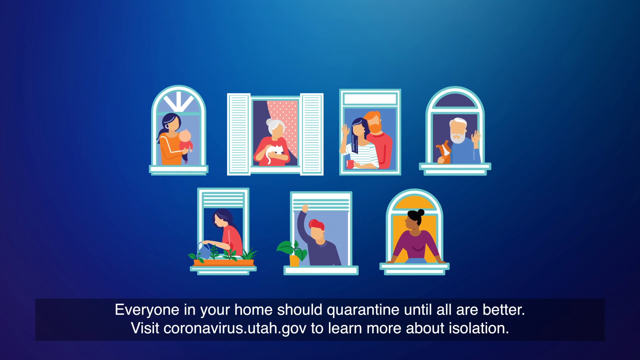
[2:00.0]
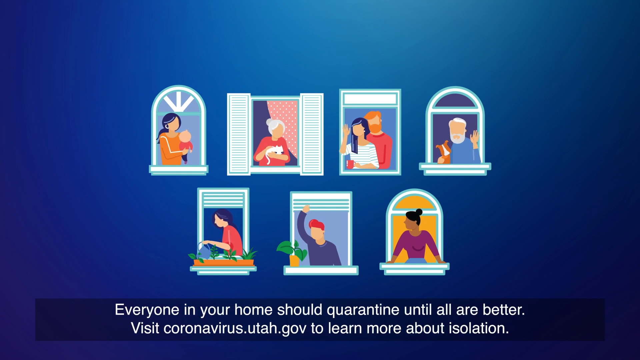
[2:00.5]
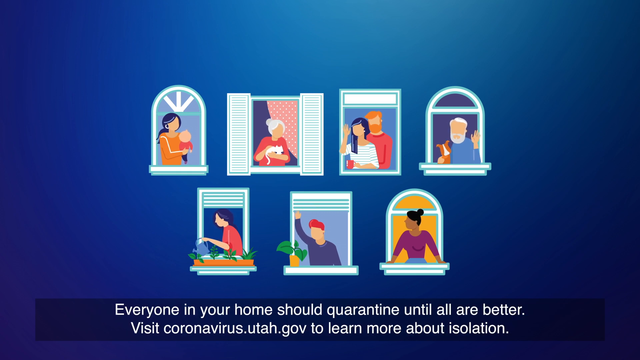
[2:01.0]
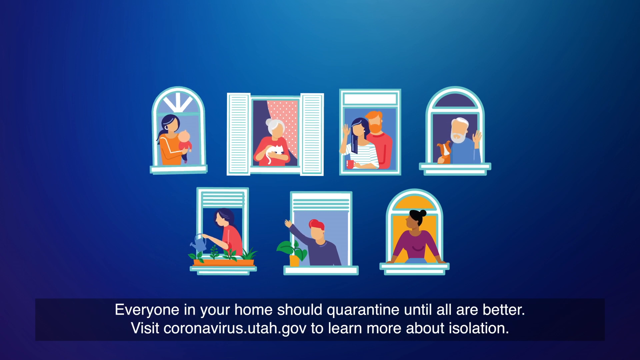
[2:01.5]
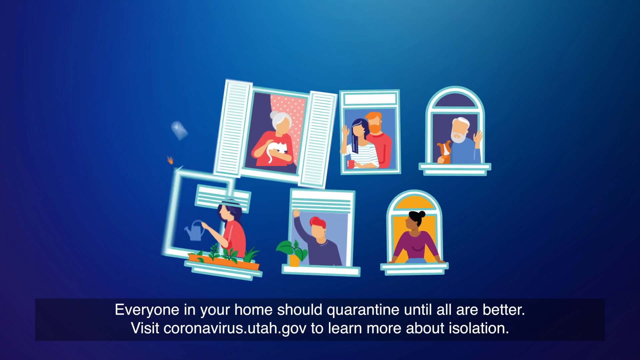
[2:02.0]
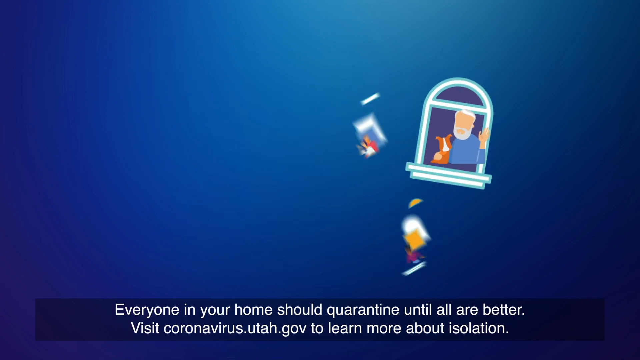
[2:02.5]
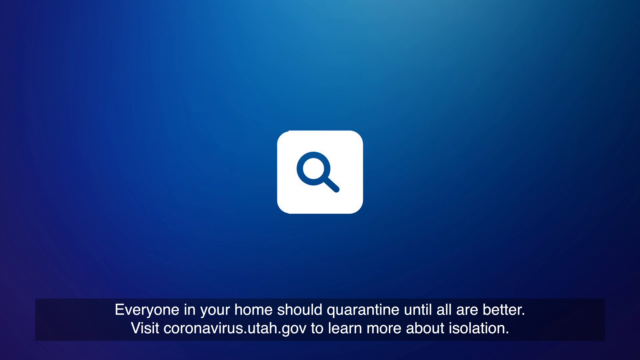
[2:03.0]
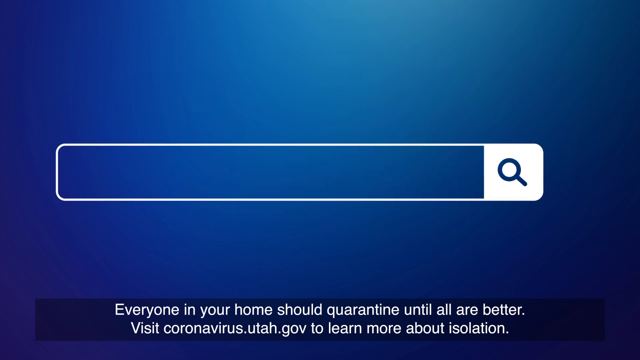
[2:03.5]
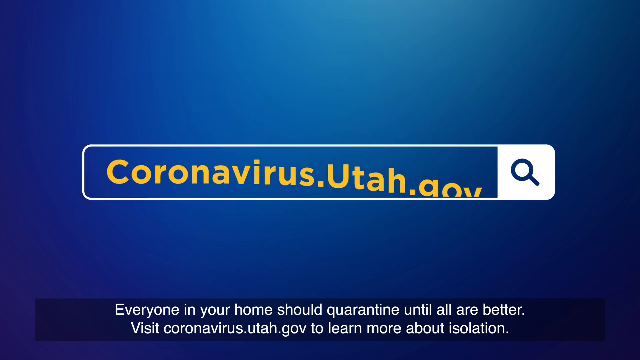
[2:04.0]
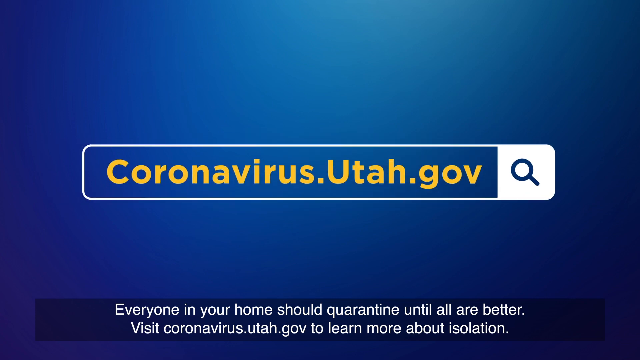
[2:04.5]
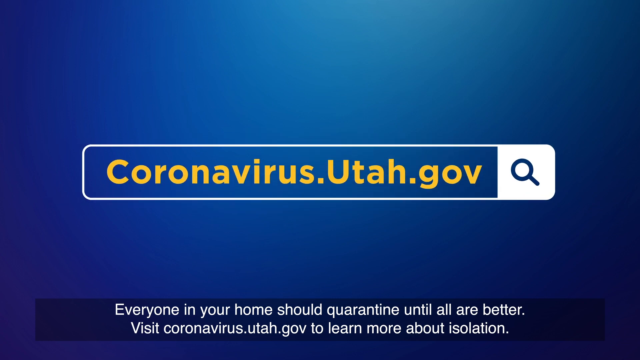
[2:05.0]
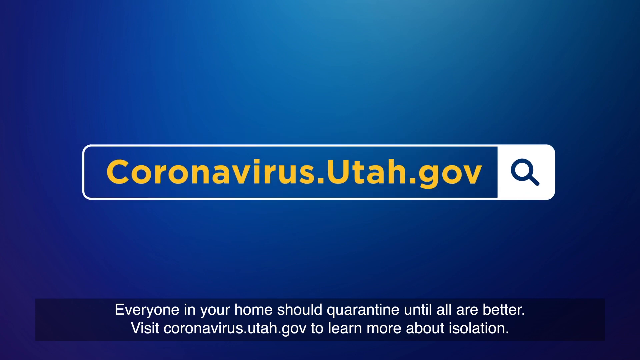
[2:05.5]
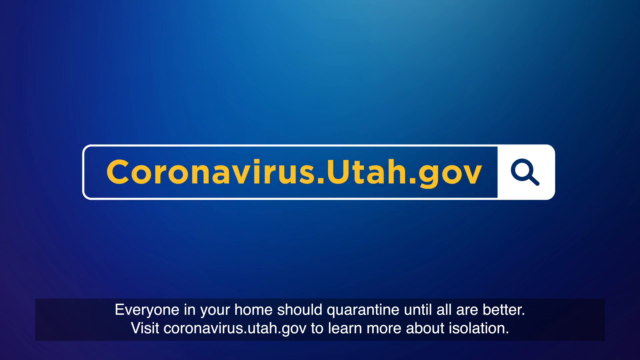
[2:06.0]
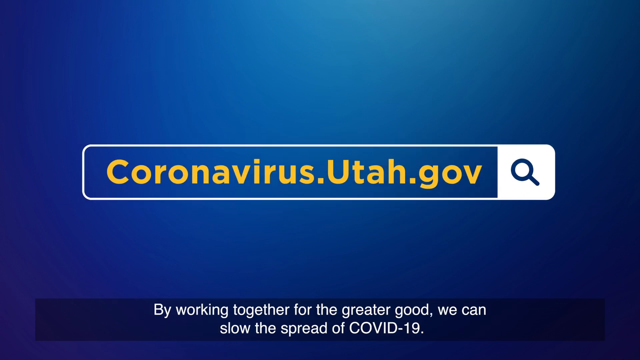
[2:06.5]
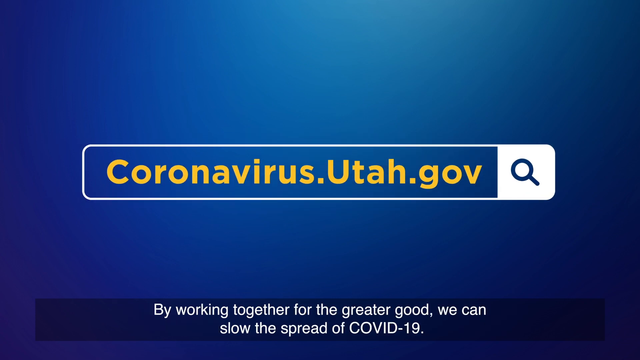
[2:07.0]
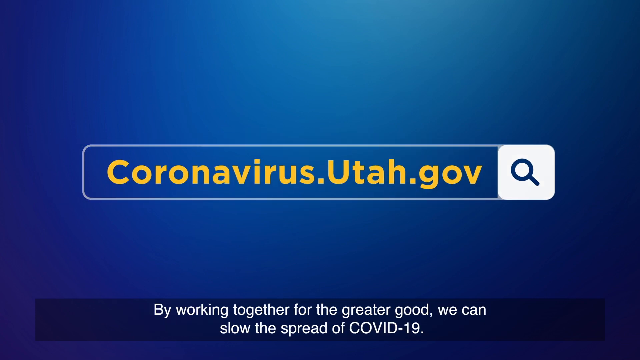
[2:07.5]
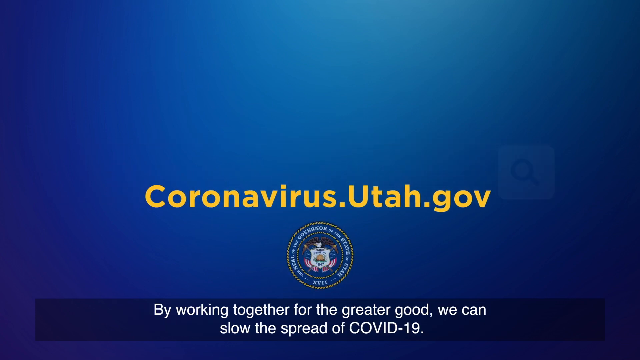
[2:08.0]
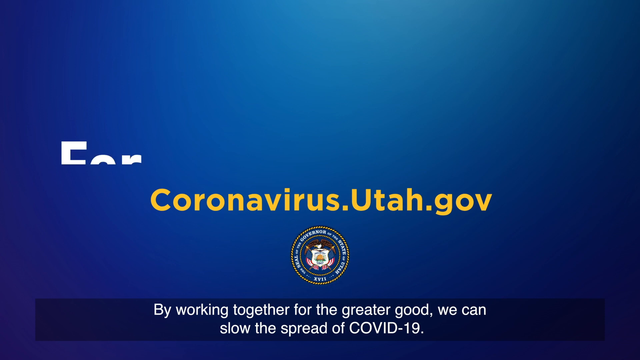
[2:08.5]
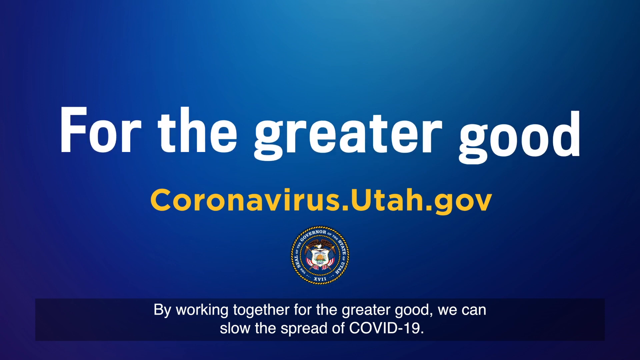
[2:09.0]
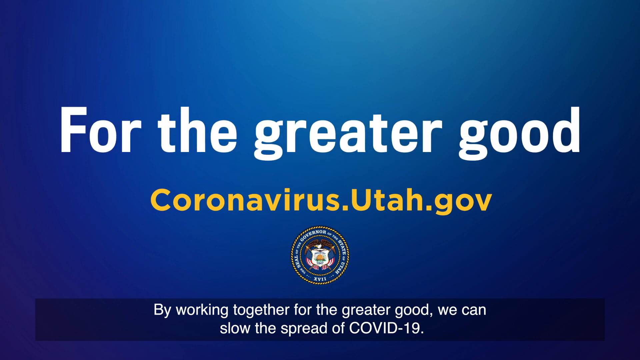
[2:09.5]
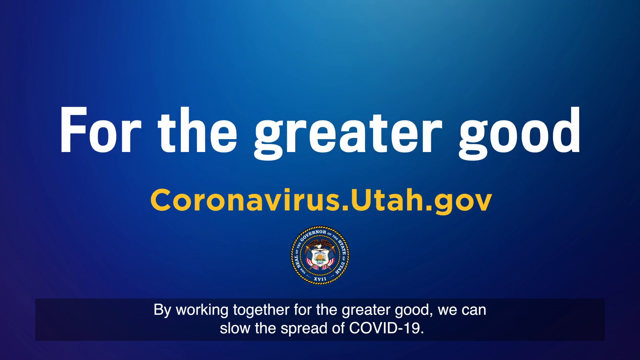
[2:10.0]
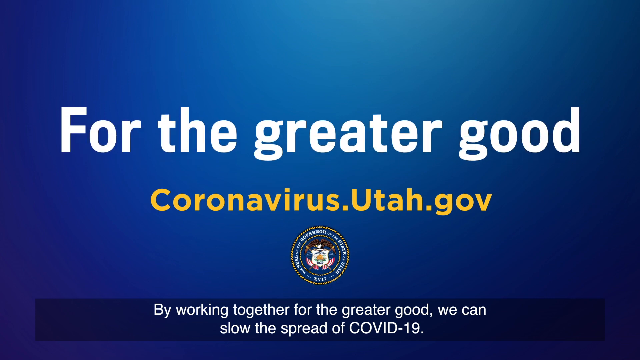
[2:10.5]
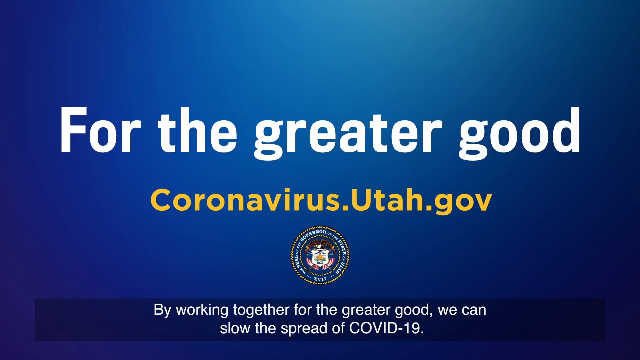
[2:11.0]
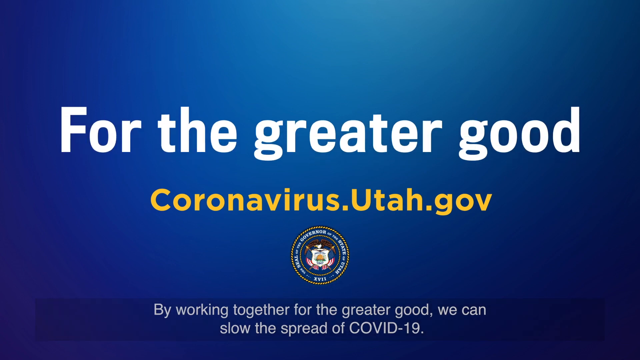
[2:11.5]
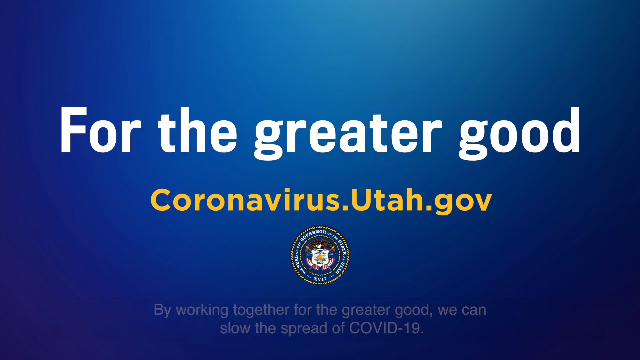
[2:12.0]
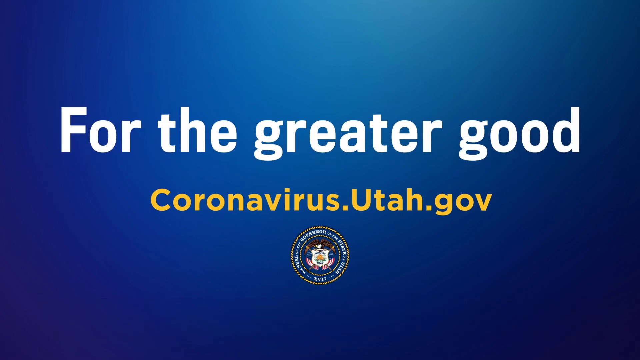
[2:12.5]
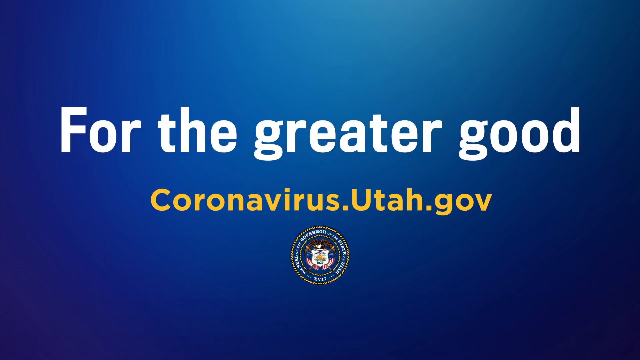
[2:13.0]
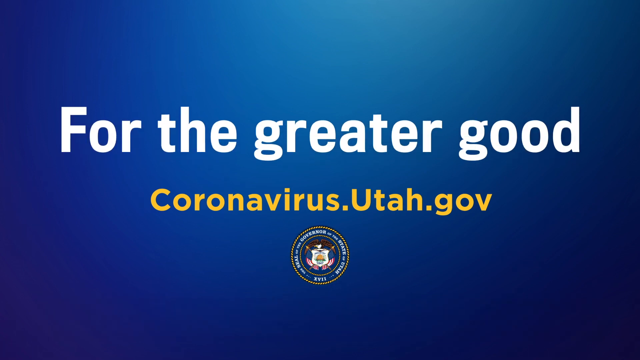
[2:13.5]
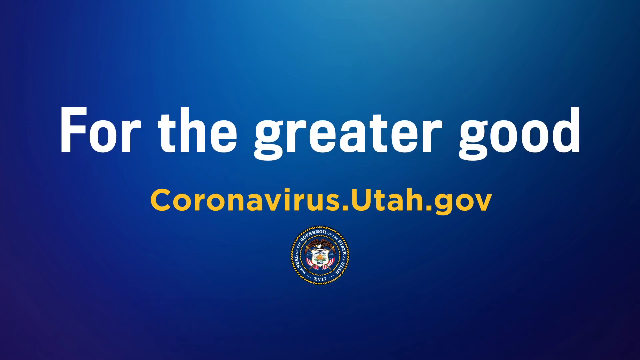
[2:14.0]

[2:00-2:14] Seven windows appear, four on the top row and three below, with people in them. In the top left window, a woman holds a baby. To the right of that, an old woman holds a cat; next is a couple; and next is an old man holding a dog. On the bottom row, a woman is watering flowers. To the right of her, a man looks like he is waving out the window. To the right of that, a woman is standing out the window with both arms on the windowsill.